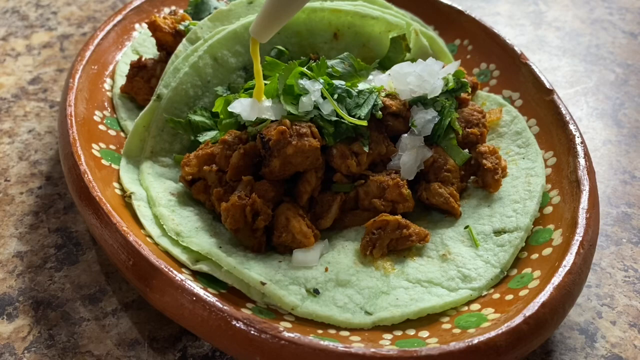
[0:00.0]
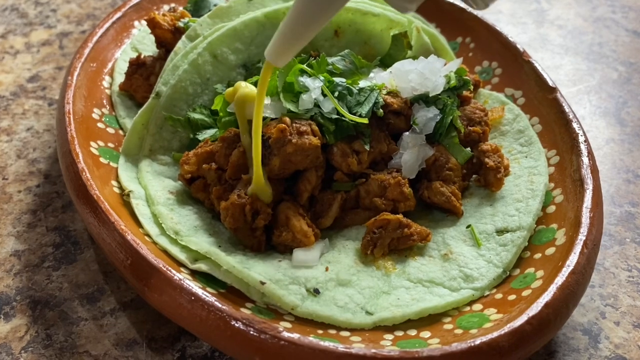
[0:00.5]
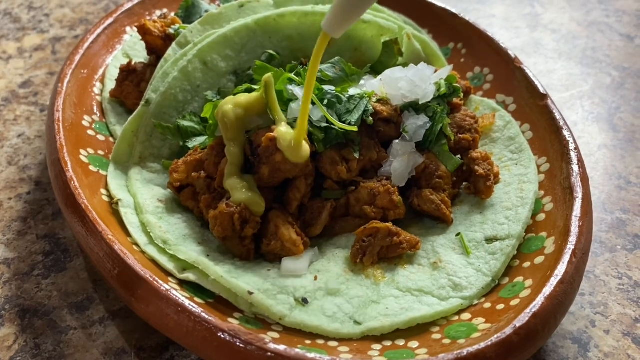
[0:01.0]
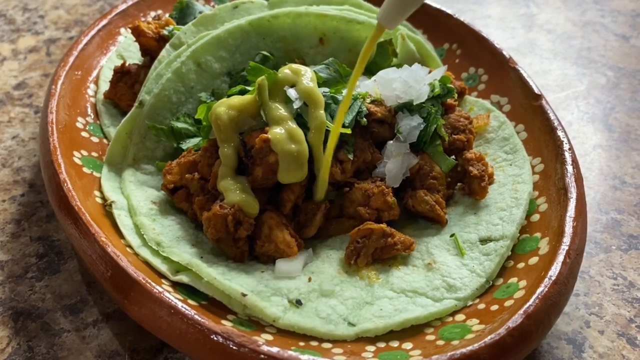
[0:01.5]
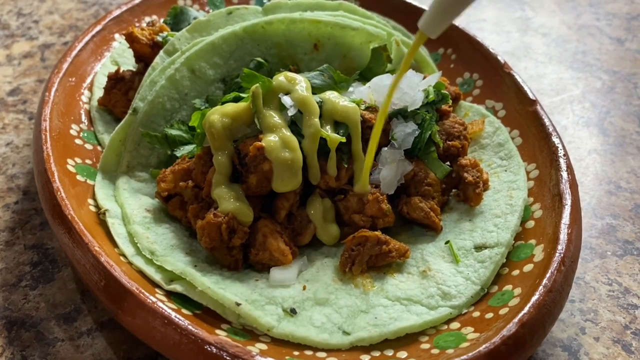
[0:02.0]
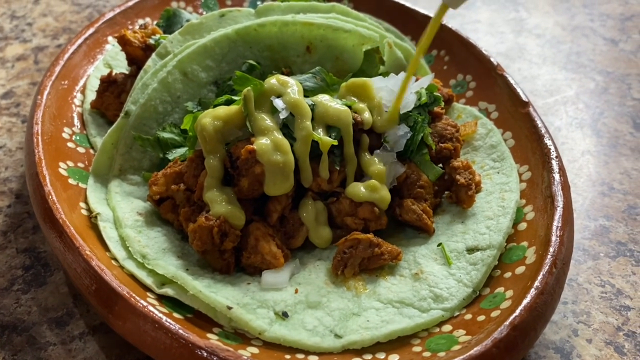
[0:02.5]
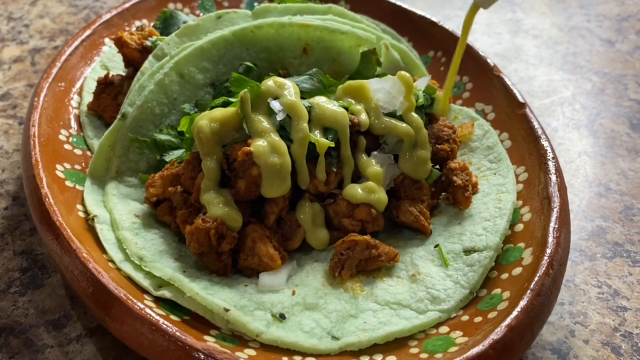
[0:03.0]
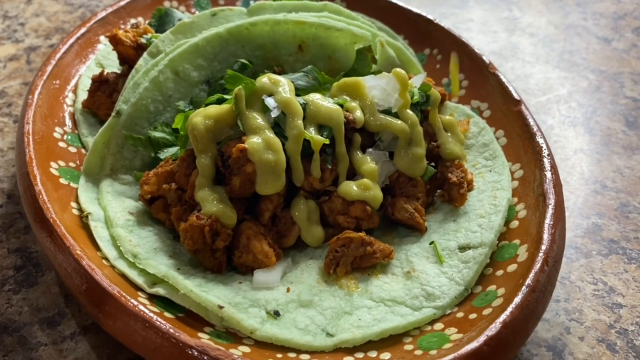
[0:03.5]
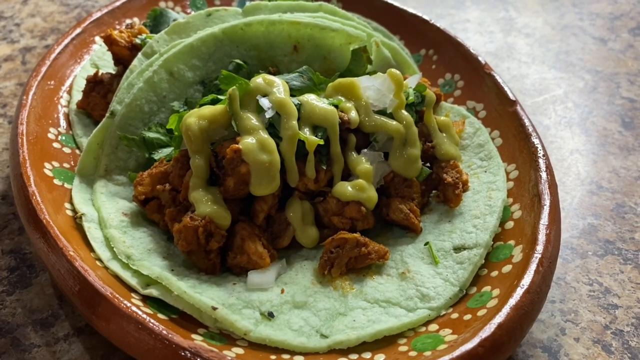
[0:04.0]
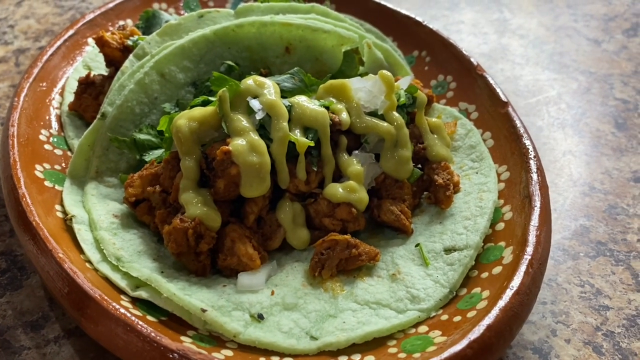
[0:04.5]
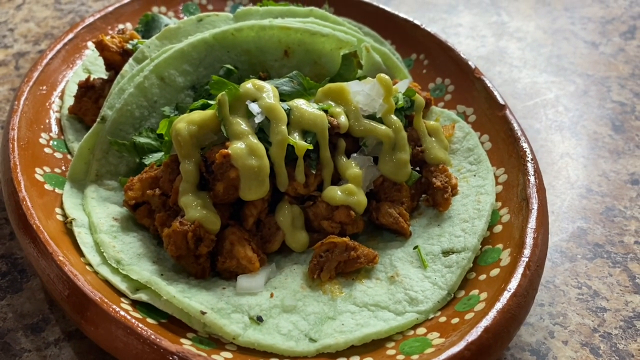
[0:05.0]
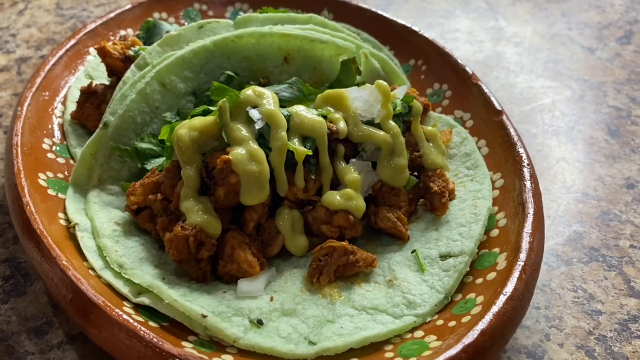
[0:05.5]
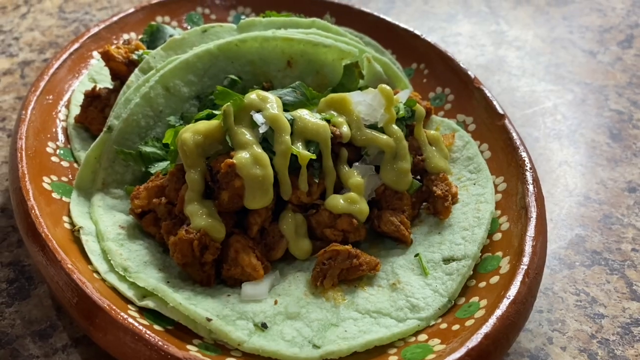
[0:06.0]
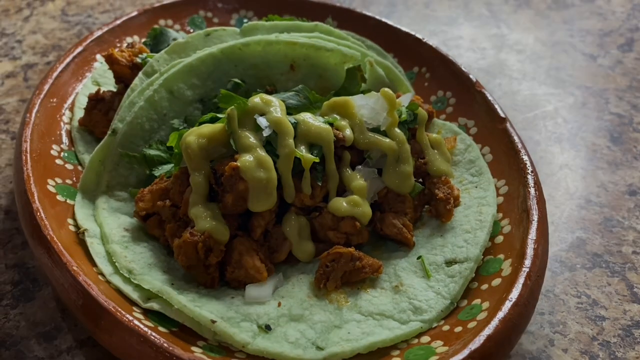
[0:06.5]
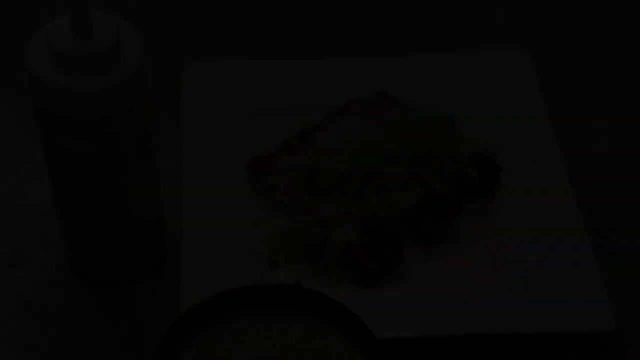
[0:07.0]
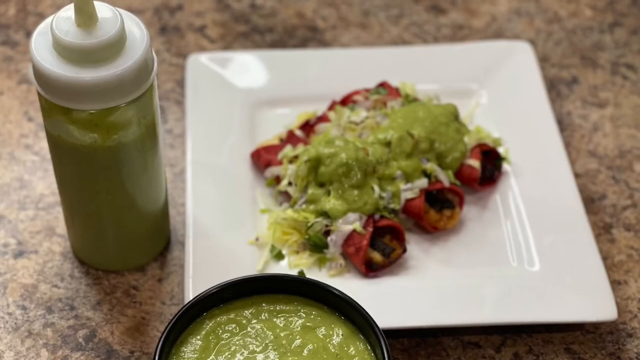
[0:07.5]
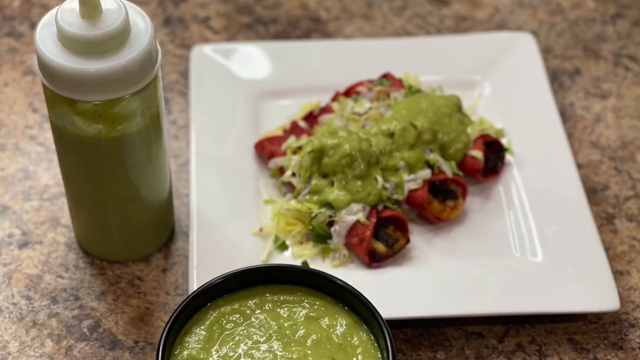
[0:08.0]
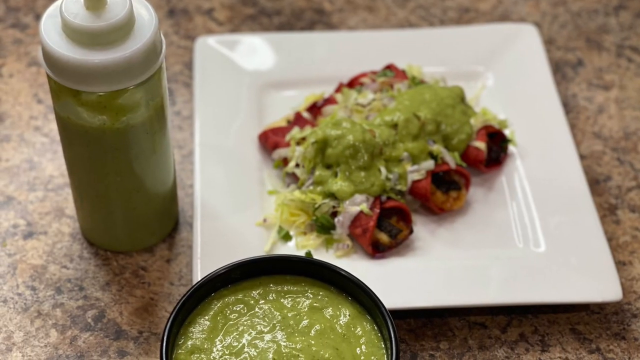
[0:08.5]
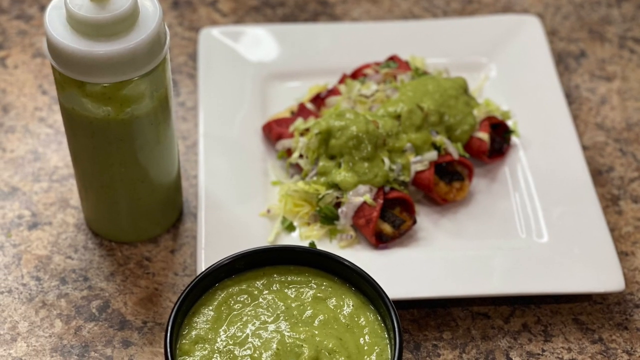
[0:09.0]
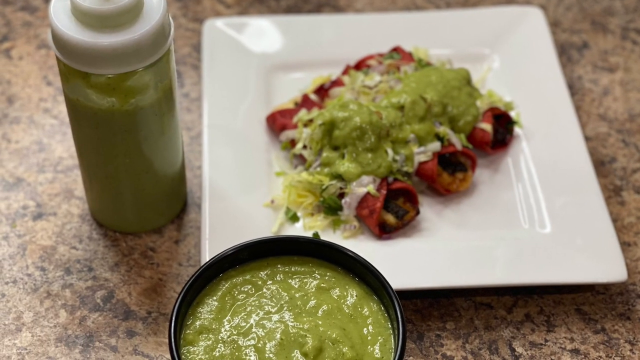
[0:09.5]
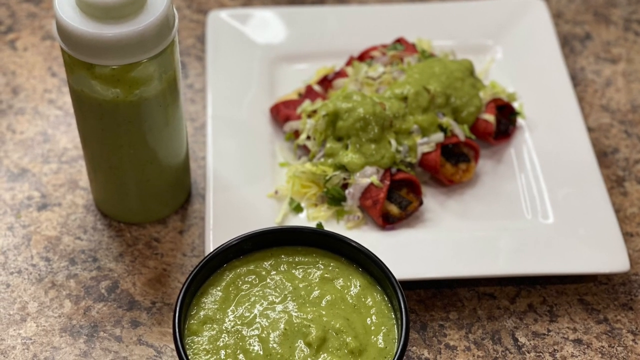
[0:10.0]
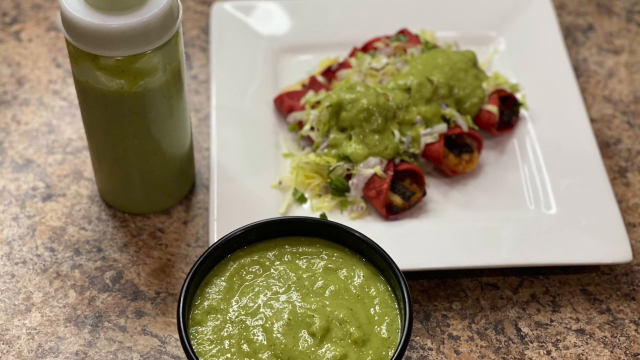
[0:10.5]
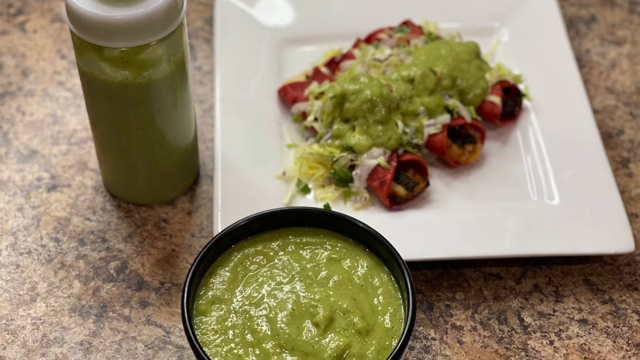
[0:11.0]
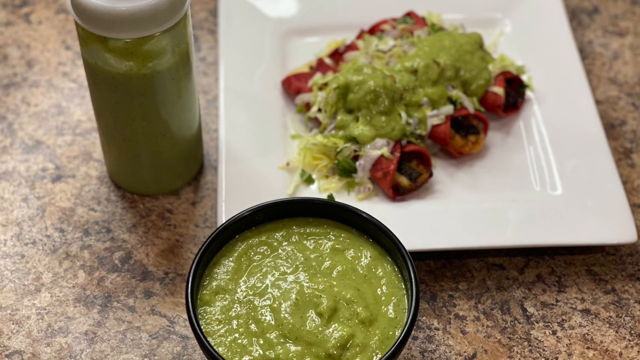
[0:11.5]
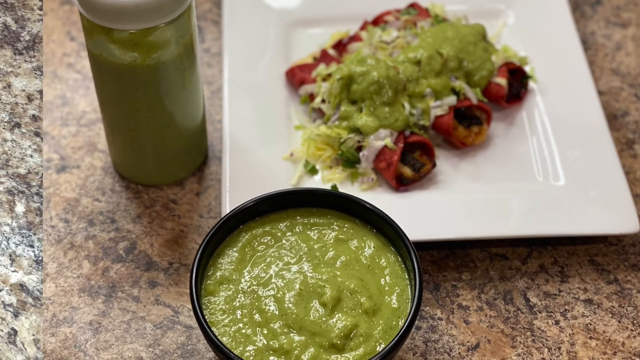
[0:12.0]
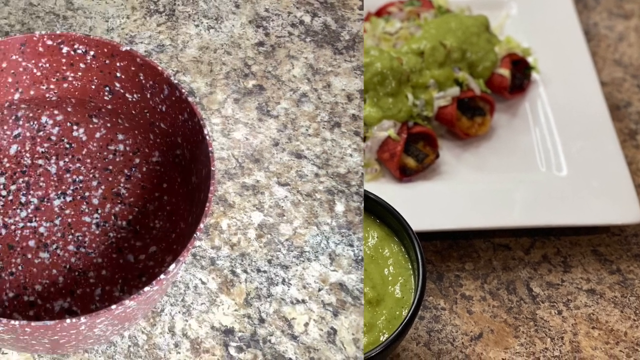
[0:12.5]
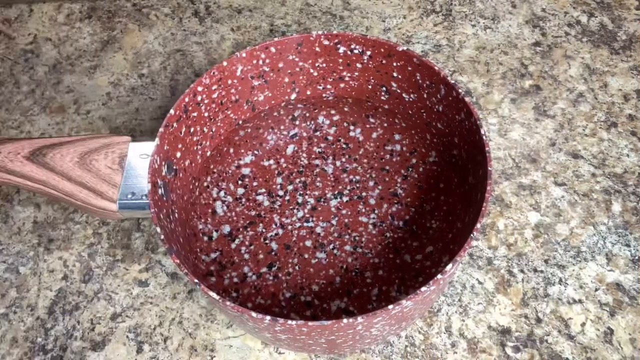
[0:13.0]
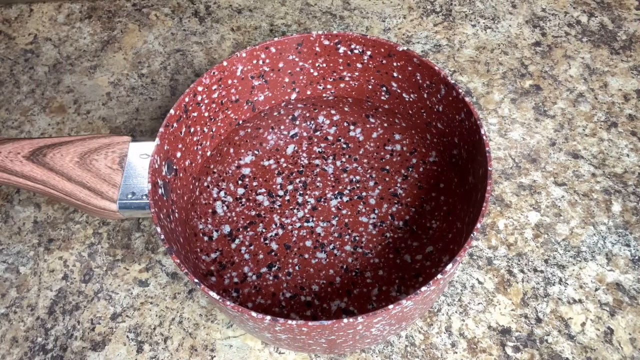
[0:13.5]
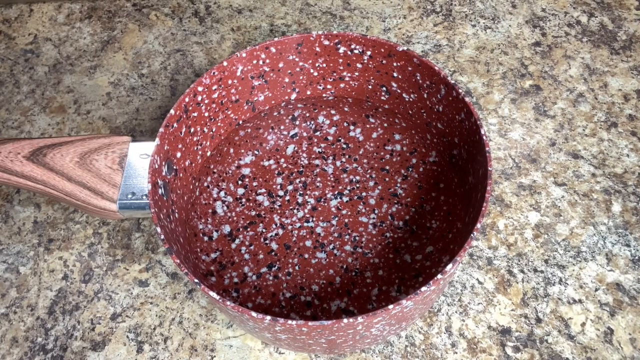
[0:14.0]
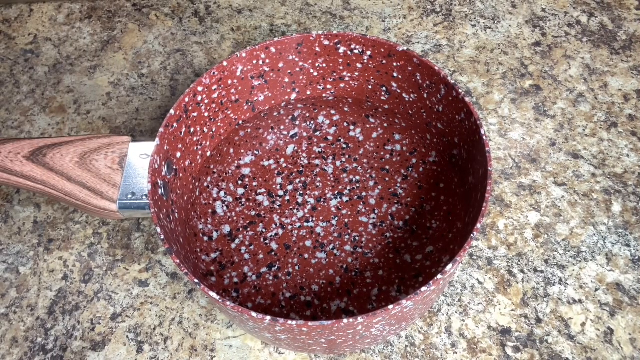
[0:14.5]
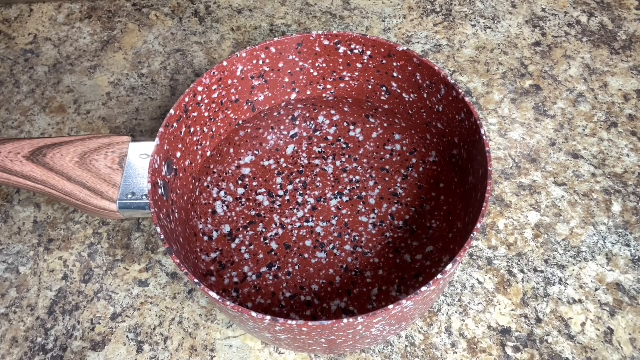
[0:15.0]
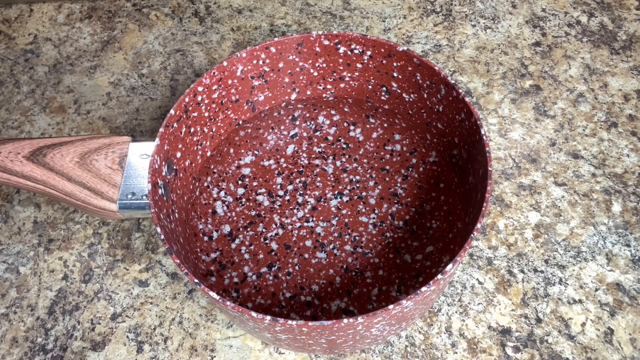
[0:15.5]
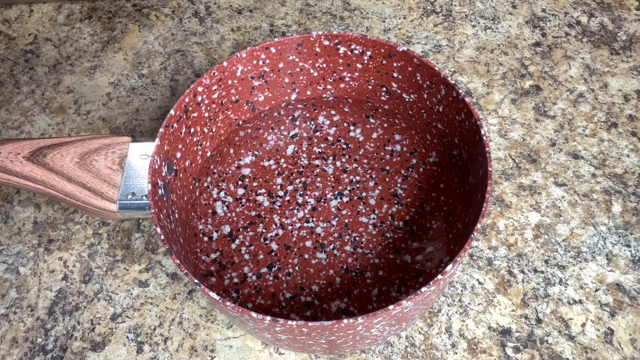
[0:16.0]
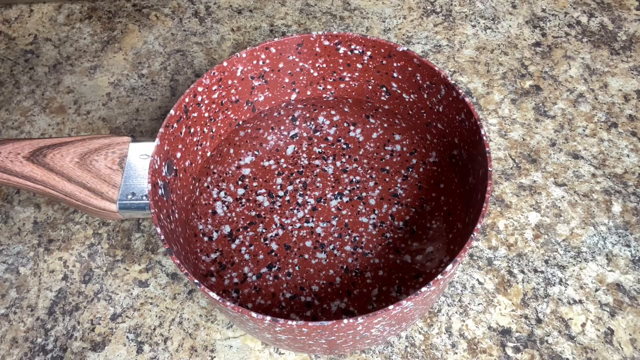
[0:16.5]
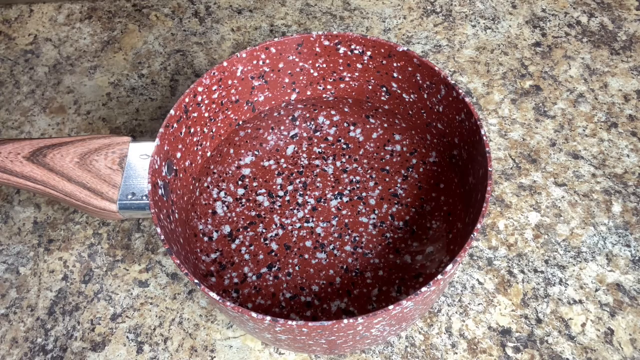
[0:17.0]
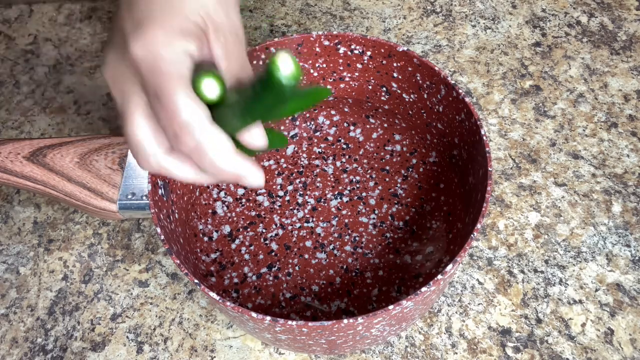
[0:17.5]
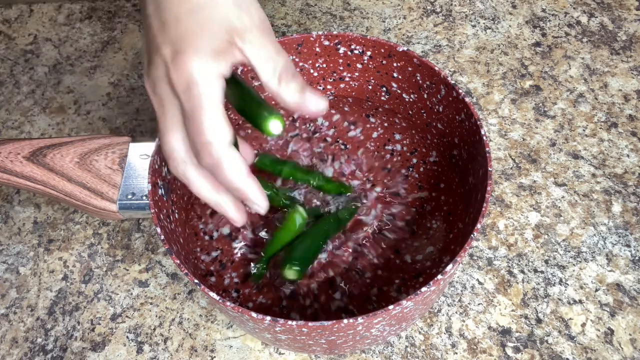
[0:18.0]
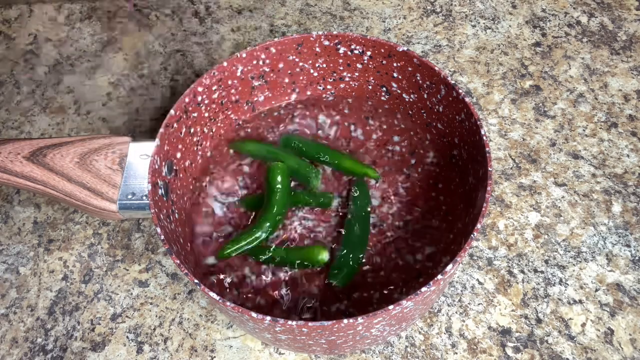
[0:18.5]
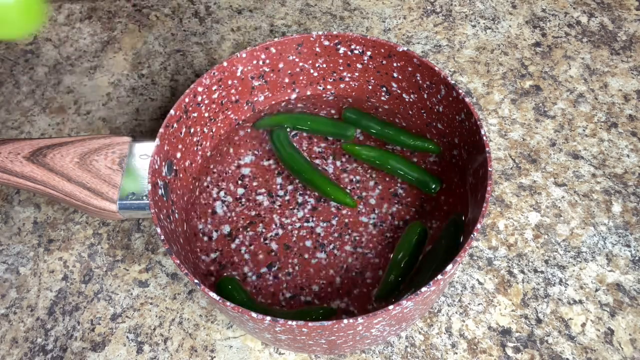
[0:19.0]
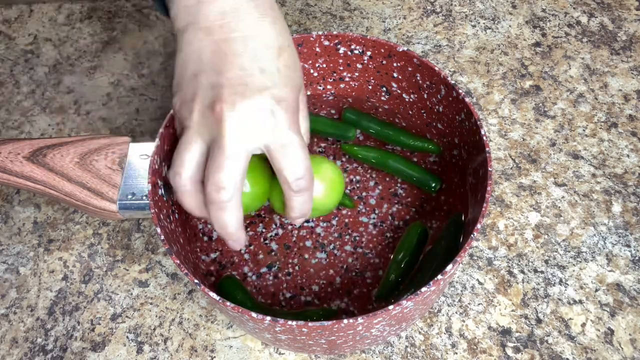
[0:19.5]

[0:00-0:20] The scene begins with a ceramic table holding a brown, Mexican-style plate. On the plate is a tortilla topped with chicken, with onions on top of the chicken. A light brown sauce mixture is poured over the onions. The scene then transitions to black. Next, a square white plate holds red enchiladas topped with a green sauce, with green salsa in a plastic cup to the left. The video then shows a view looking down at a black bowl full of green sauce. The scene then transitions to an empty black, red, and white pan. A hand comes in from the top left of the screen and drops green chili peppers into water, then drops in lemon.